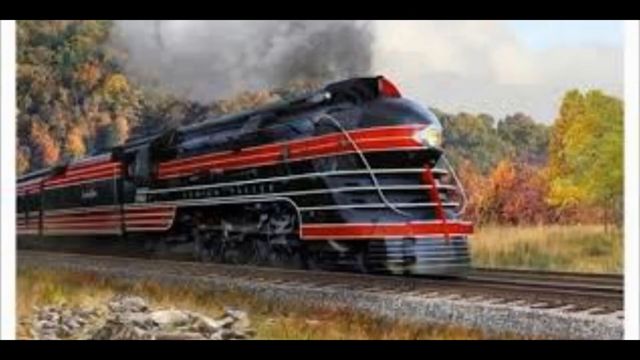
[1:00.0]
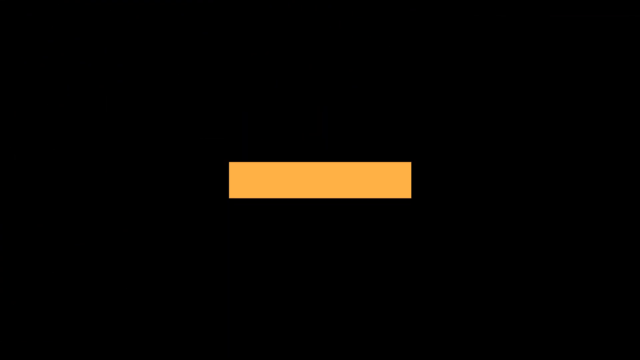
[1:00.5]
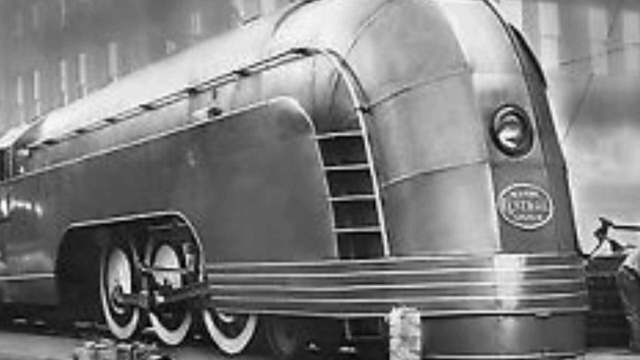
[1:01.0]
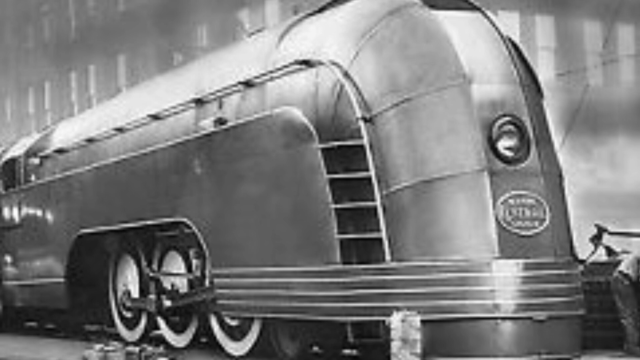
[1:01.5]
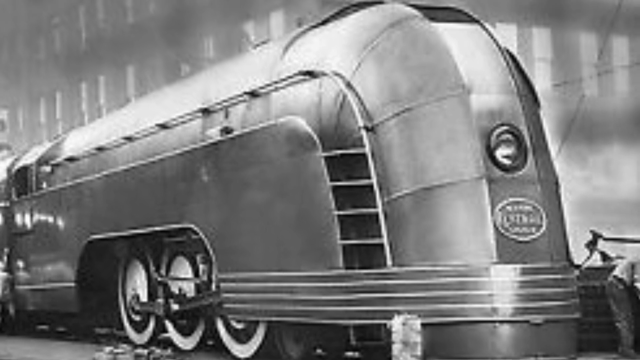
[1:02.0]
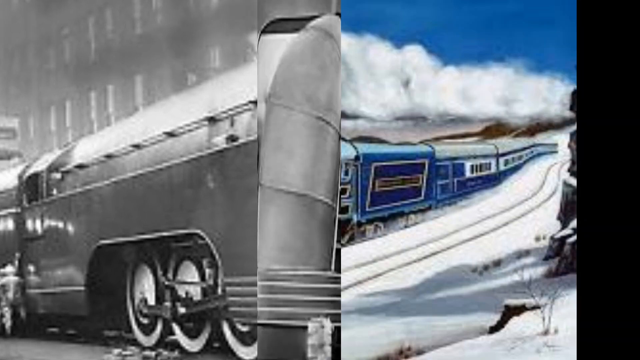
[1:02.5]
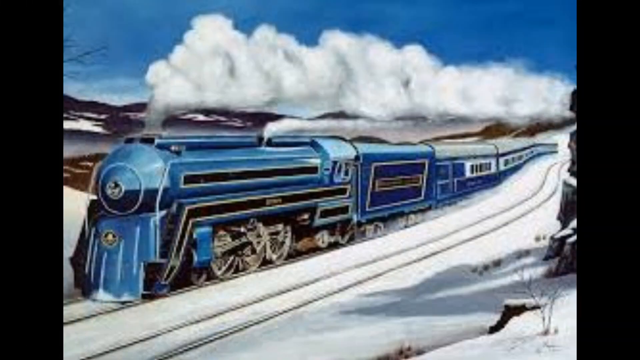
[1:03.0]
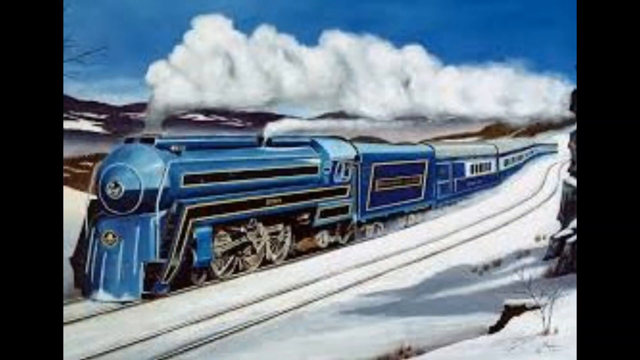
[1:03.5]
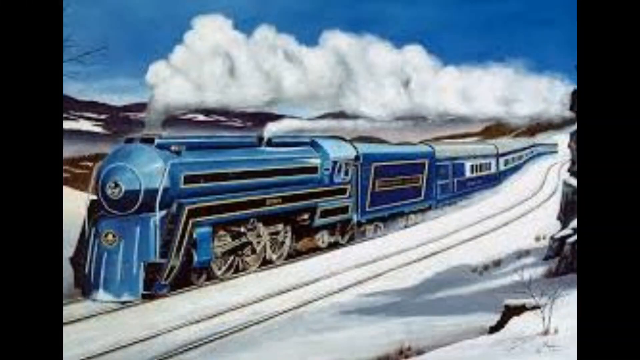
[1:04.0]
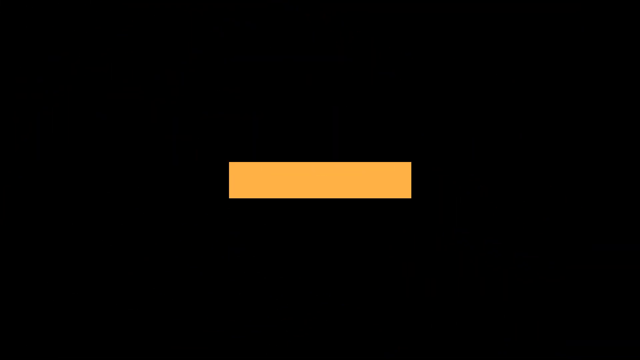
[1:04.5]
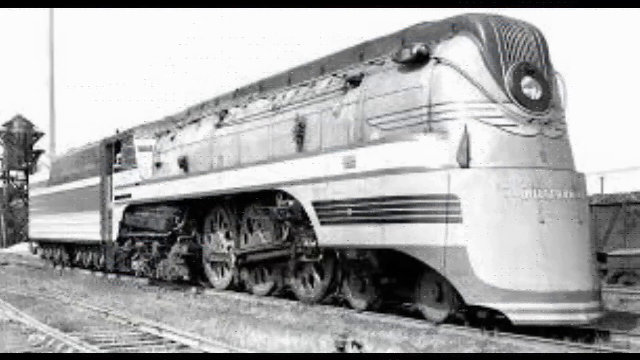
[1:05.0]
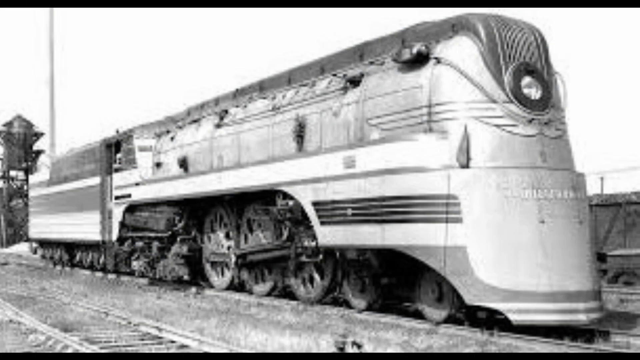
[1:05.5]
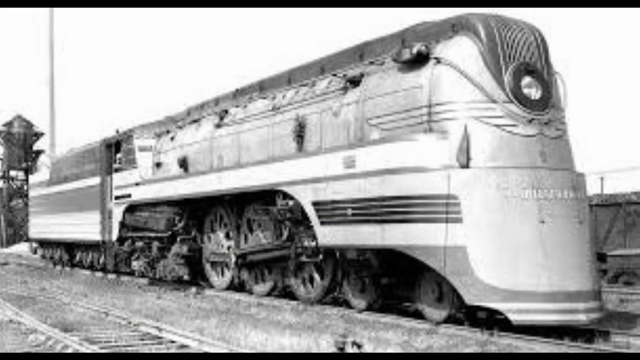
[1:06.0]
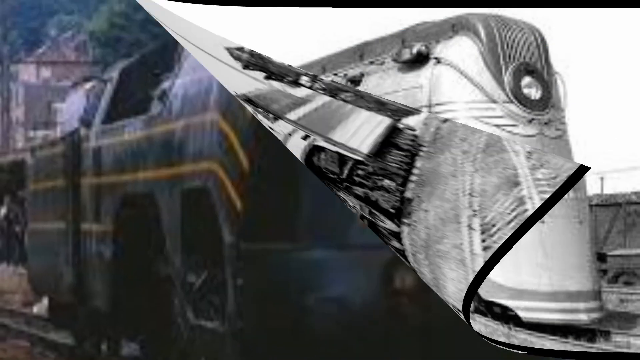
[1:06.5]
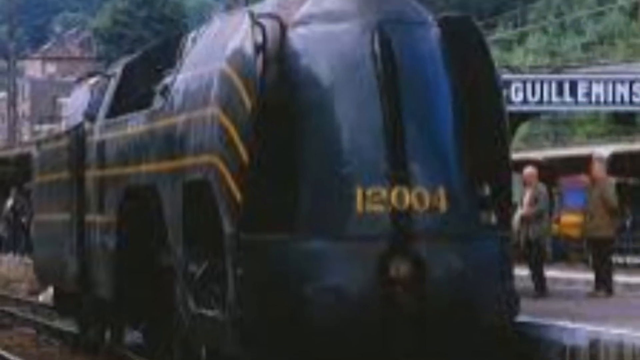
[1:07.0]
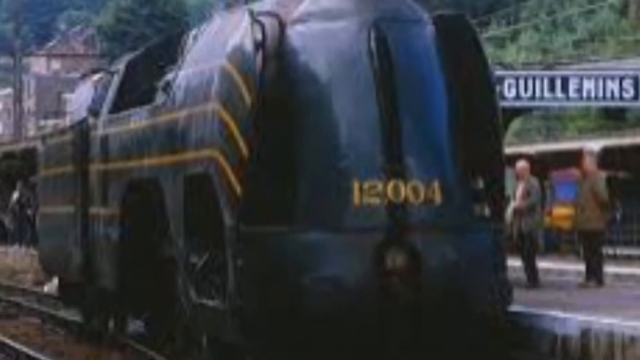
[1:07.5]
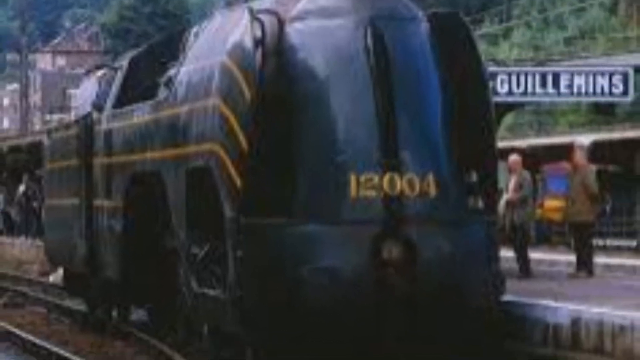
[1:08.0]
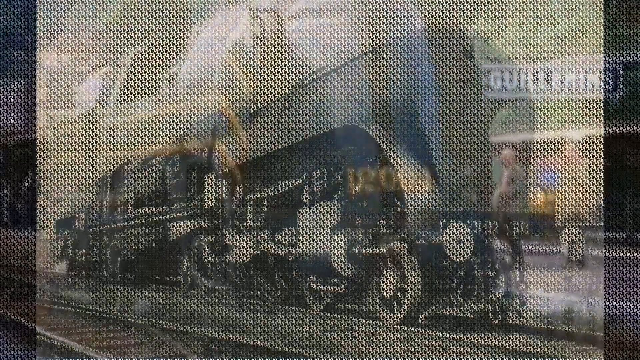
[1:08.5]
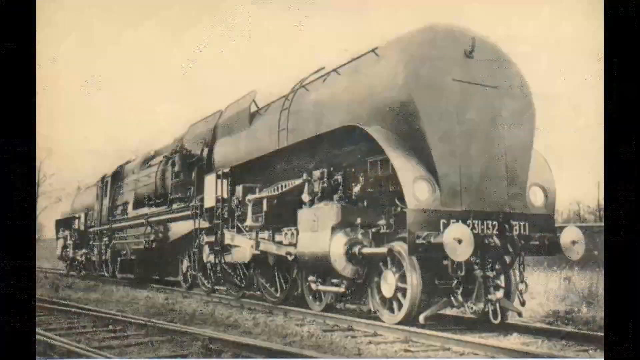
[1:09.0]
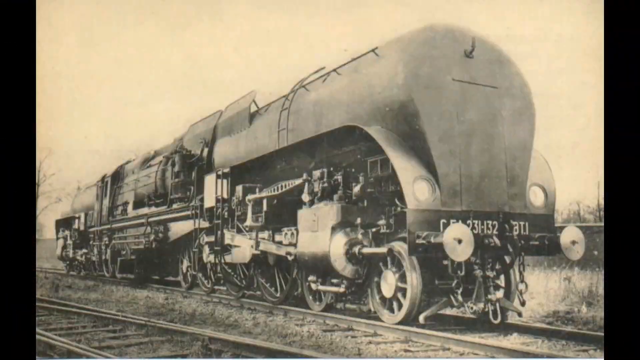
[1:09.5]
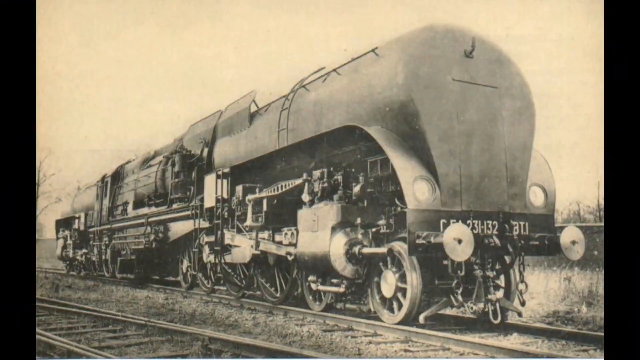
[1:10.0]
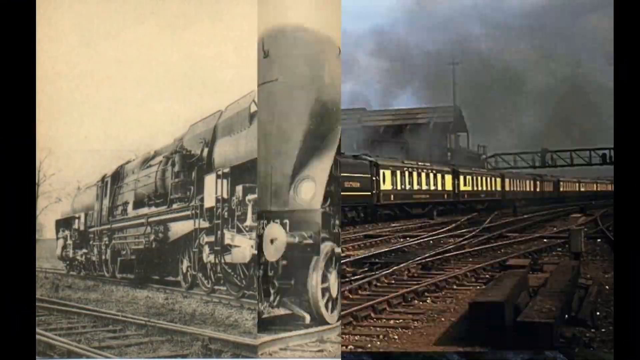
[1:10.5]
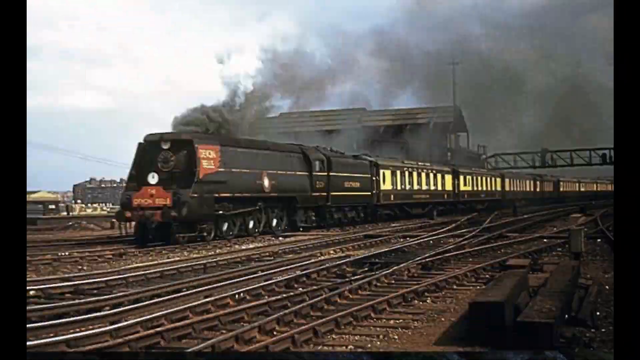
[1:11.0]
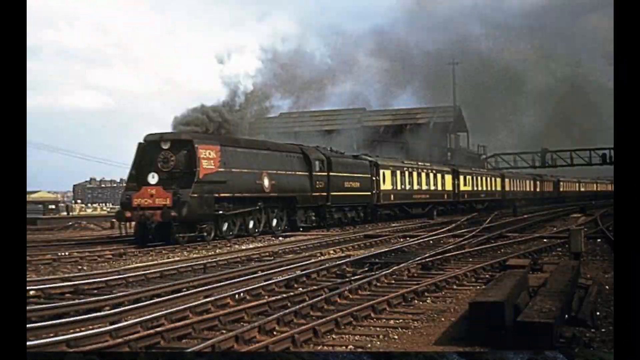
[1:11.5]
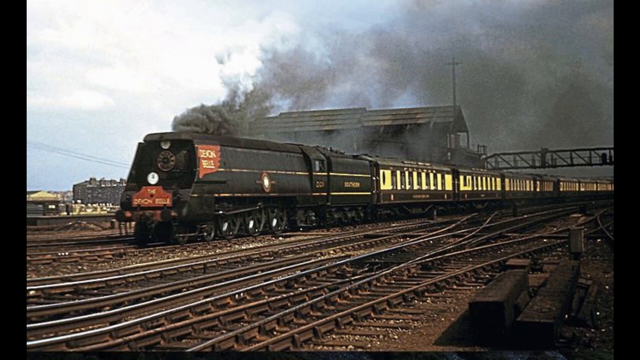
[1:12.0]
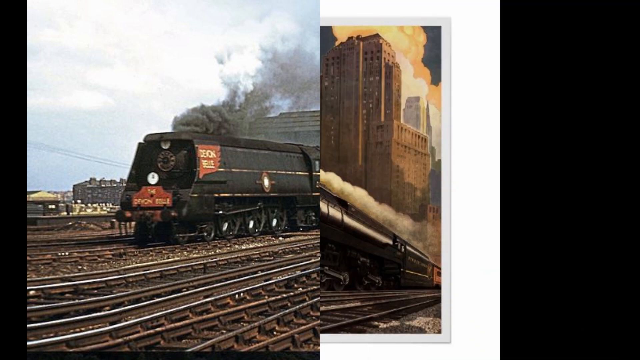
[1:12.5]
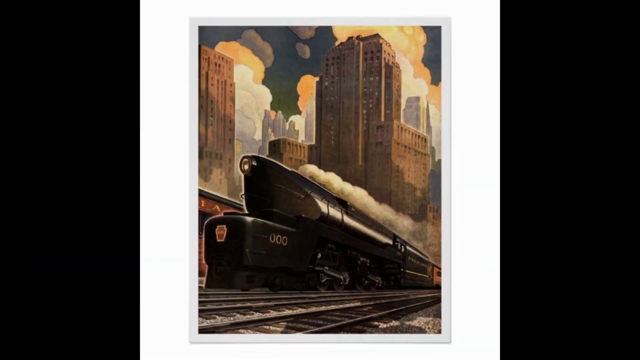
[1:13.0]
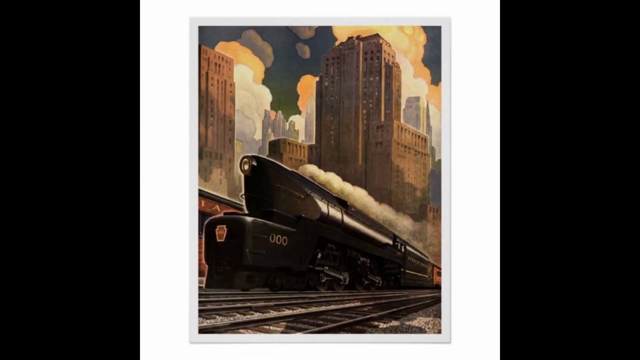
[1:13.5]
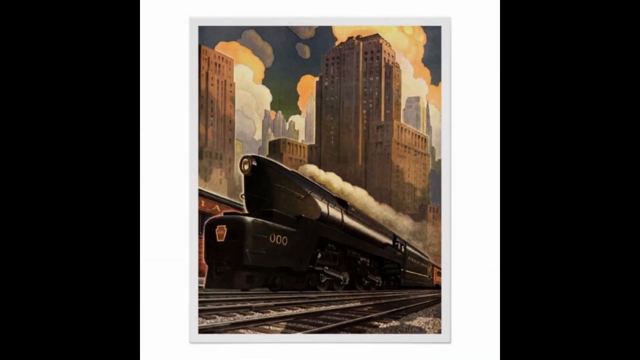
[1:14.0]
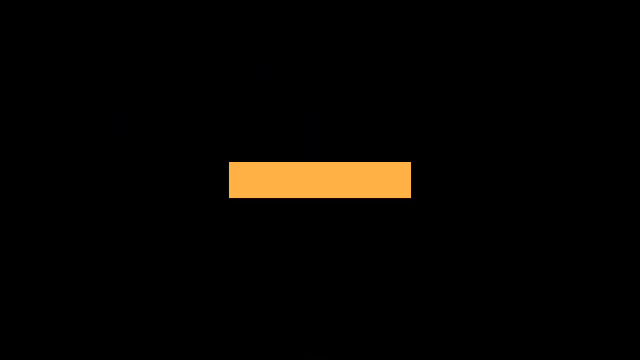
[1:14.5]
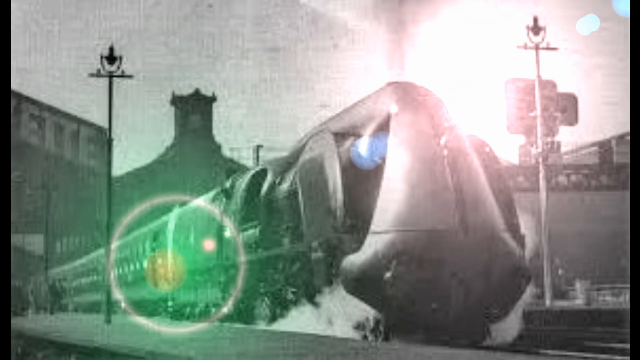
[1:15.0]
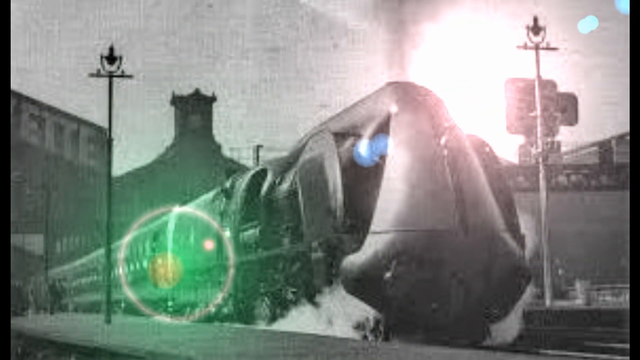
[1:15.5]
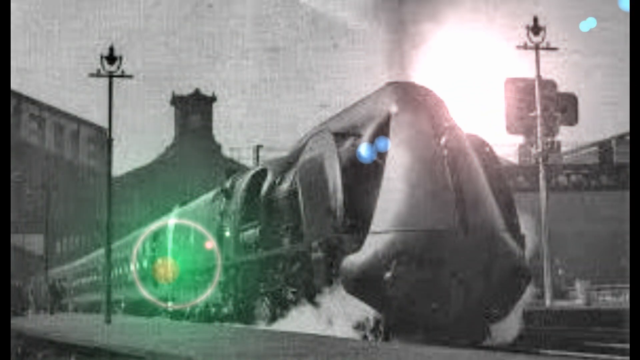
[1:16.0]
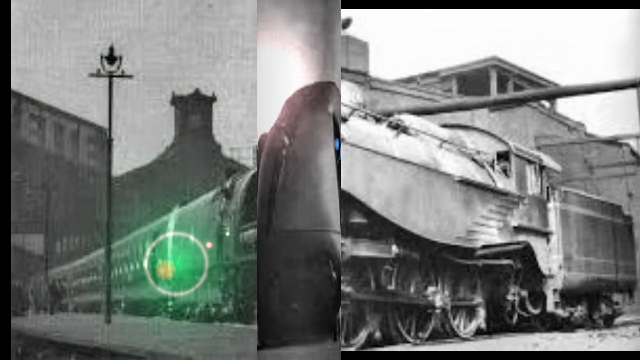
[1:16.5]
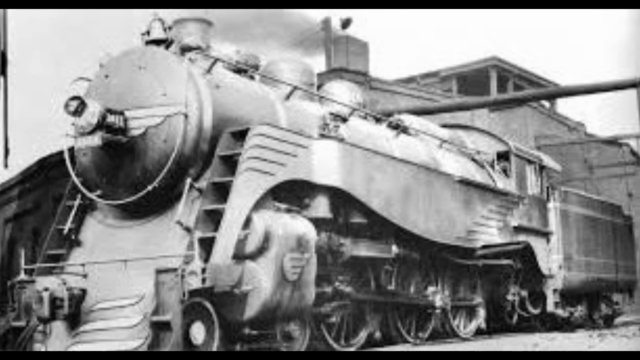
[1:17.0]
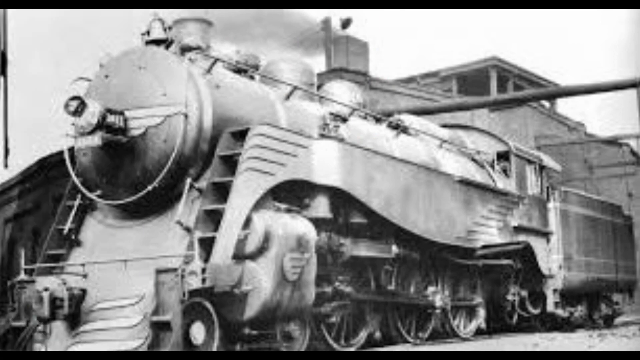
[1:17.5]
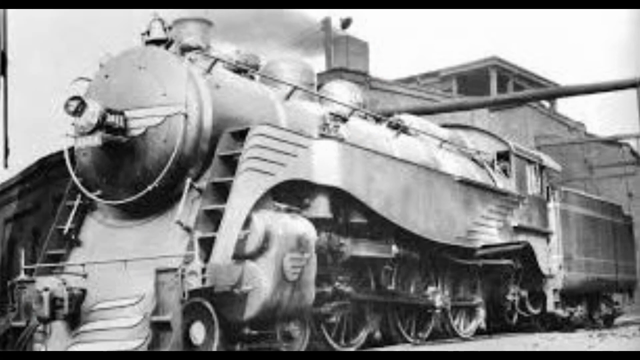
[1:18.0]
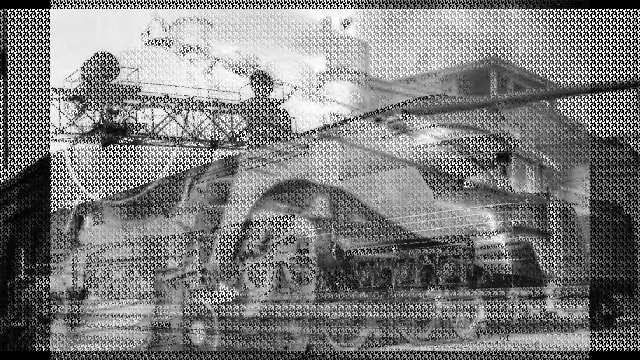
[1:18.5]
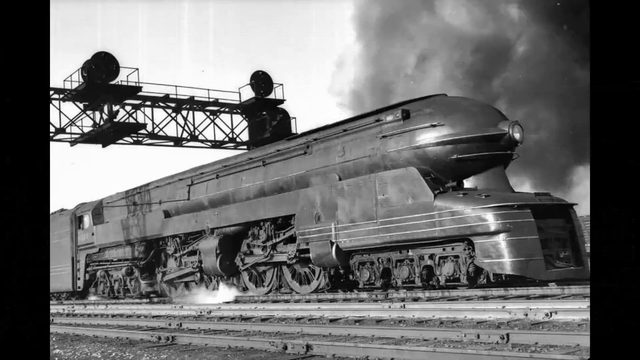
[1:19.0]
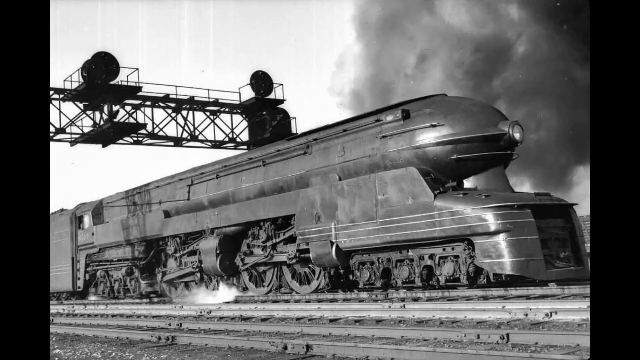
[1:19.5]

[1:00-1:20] A photorealist painting shows a black train with a red trim. Next, a black and white image, either a photo or possibly a photorealist painting, shows a modern-looking steam train. An old-fashioned style painting follows of a blue steam train moving through a snow-covered landscape, its white steam contrasting with the snow on the ground. An old black and white photo then shows a very distinctive-looking train with an unusual front. Next is apparently a French train, possibly in Guillemins, with the number 12004 on the front. Another distinctive-looking train has a front that looks like the head of the alien from the Alien films. An old-fashioned steam train emits dirty black smoke. A postcard image shows a steam train with a cityscape behind it. A black and white image shows a train with a circular front and an old-fashioned city building behind it. Finally, a very black and white image shows an unusual-looking train with a plume of black smoke above it that looks a bit like a black cloud, though it is apparently the smoke.